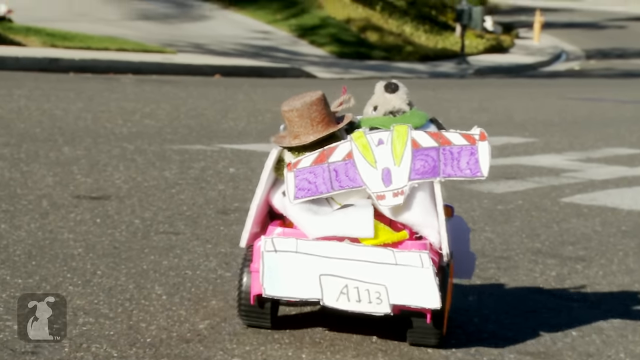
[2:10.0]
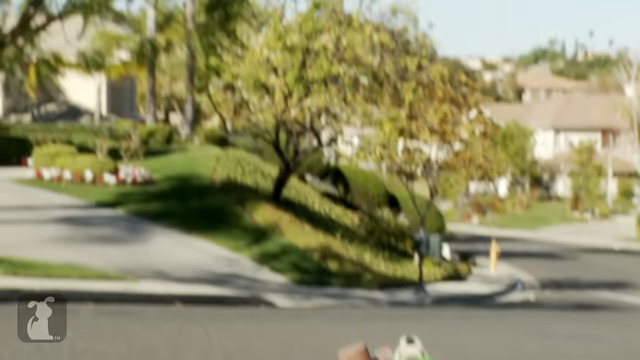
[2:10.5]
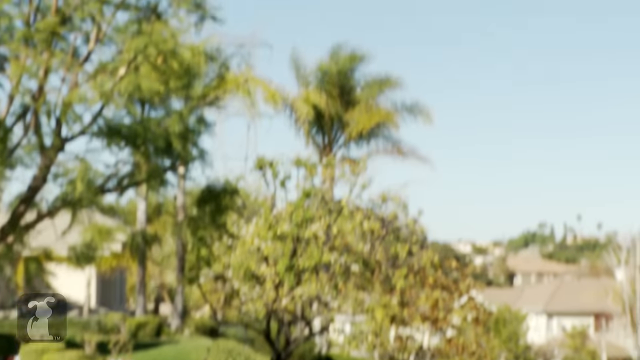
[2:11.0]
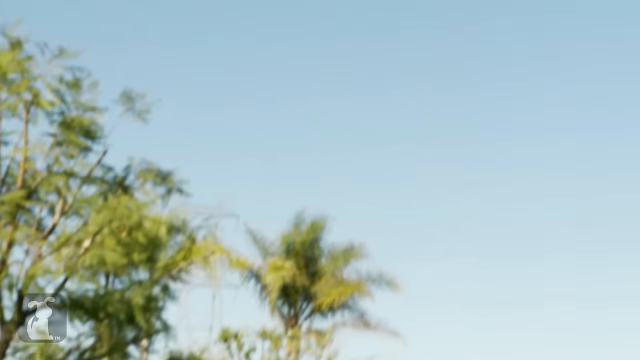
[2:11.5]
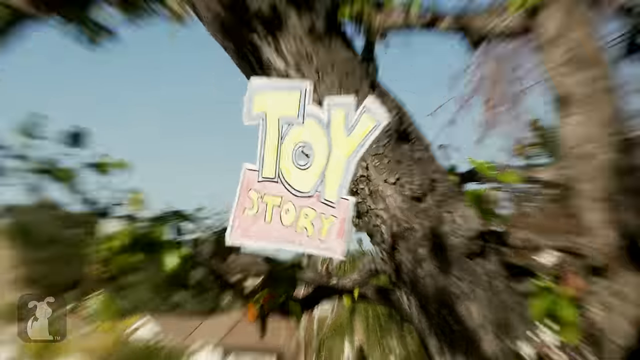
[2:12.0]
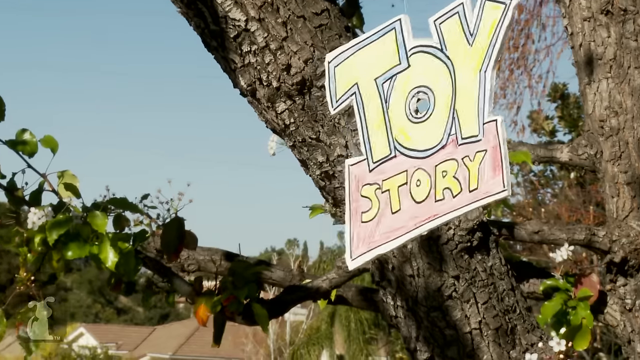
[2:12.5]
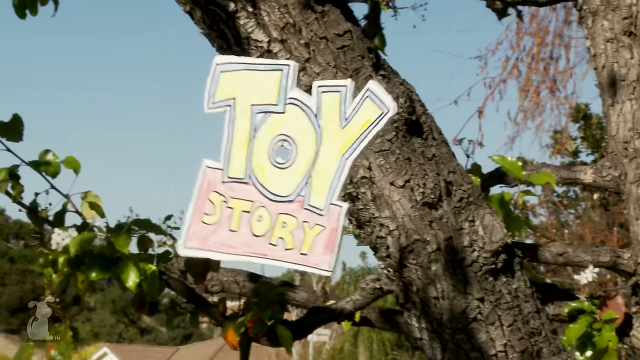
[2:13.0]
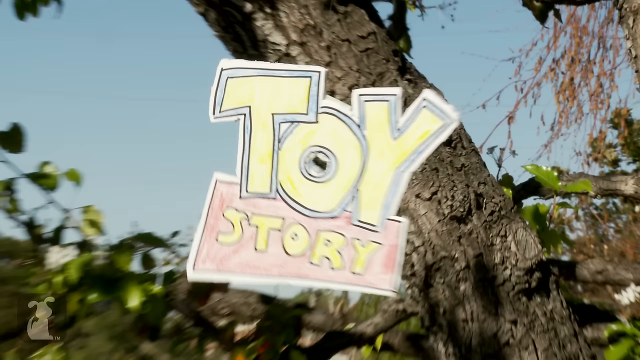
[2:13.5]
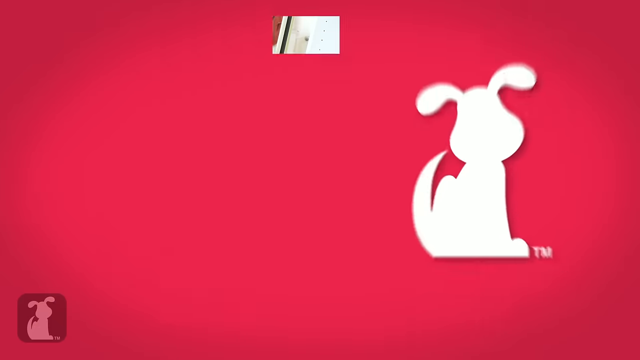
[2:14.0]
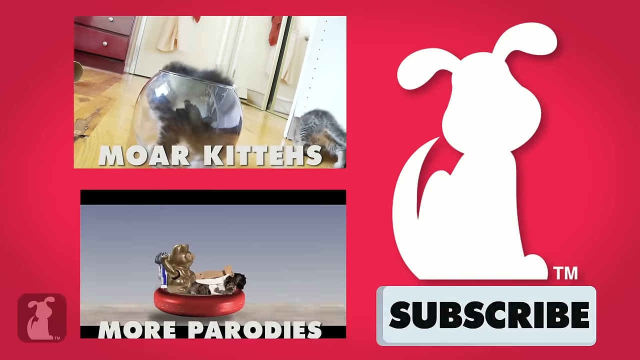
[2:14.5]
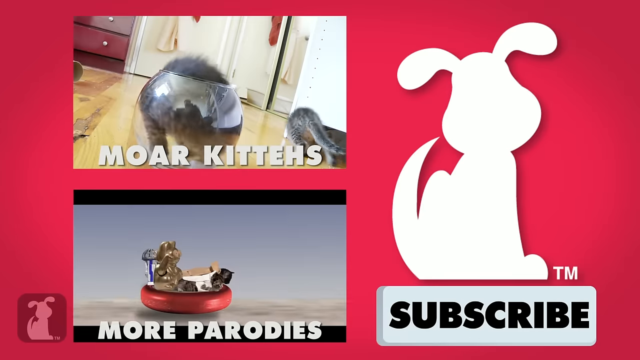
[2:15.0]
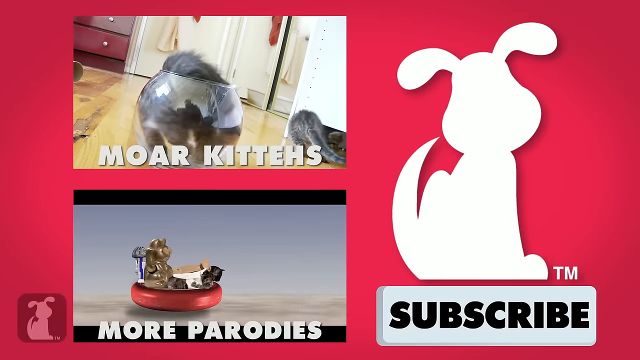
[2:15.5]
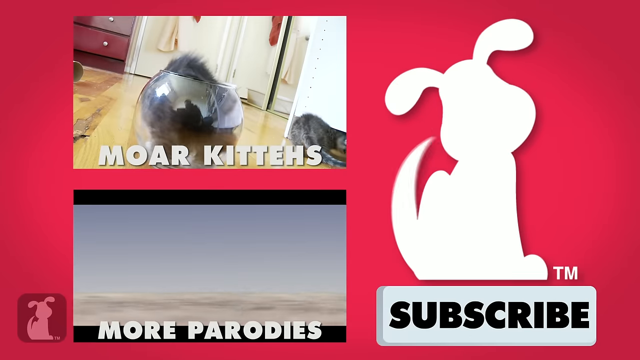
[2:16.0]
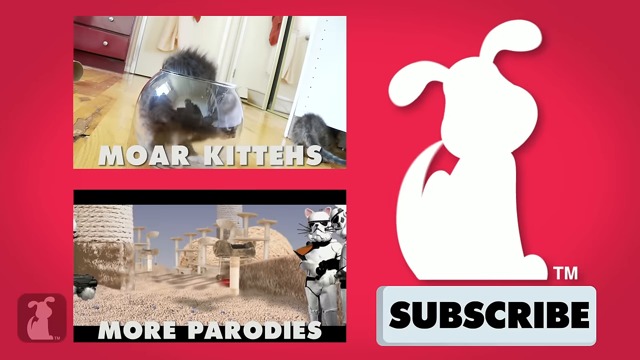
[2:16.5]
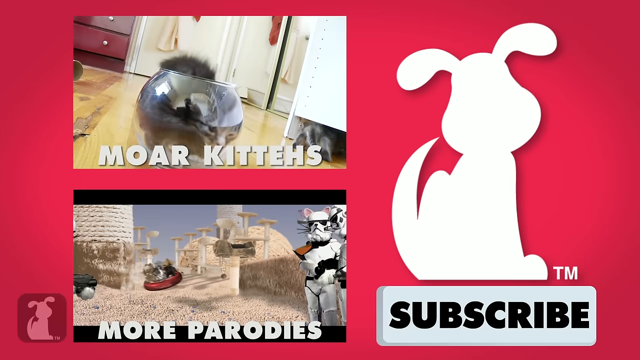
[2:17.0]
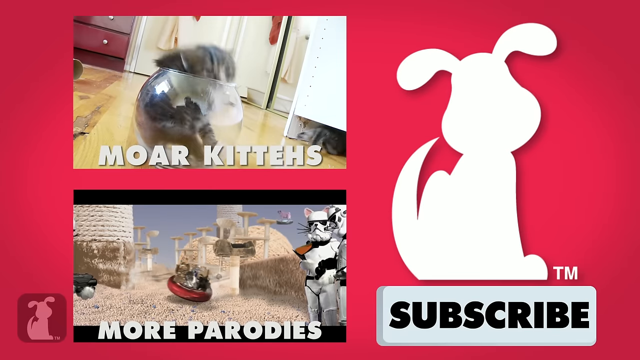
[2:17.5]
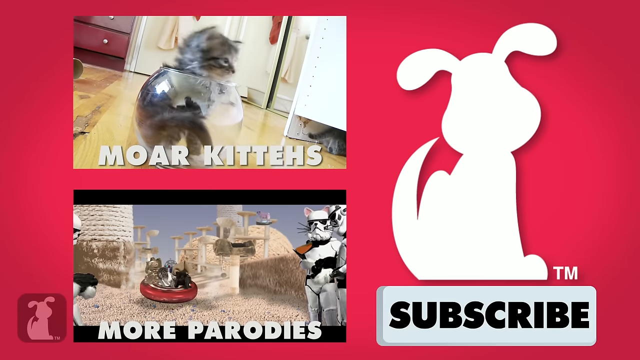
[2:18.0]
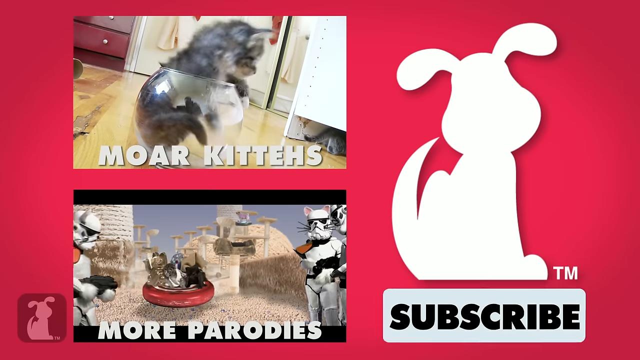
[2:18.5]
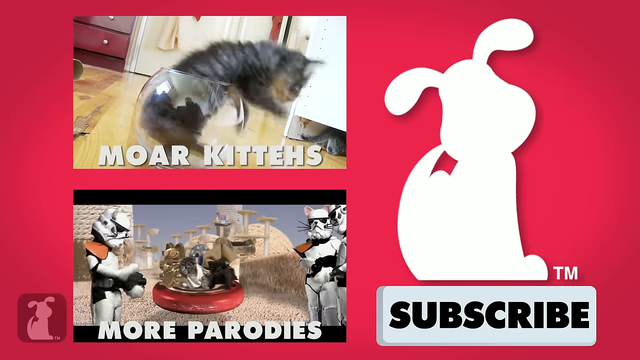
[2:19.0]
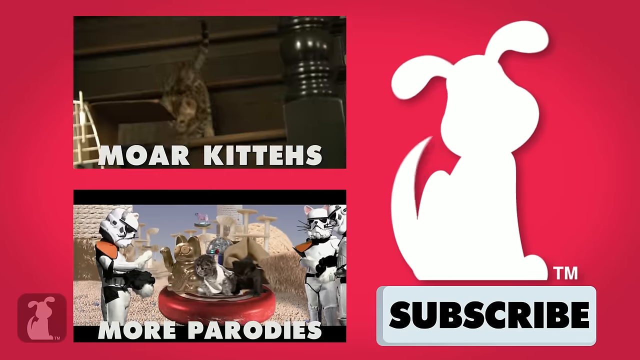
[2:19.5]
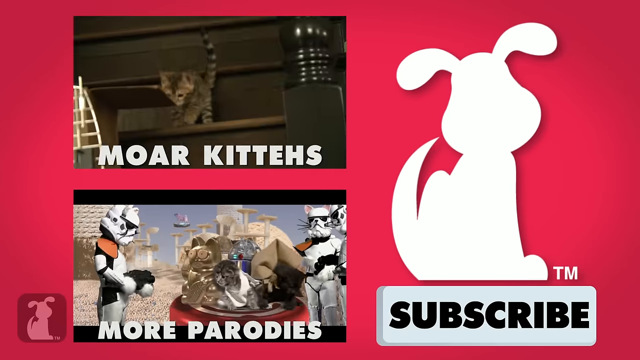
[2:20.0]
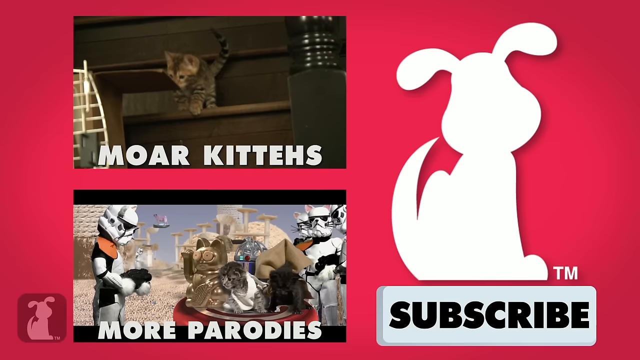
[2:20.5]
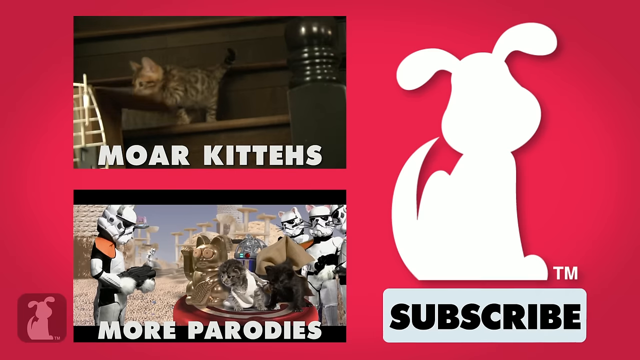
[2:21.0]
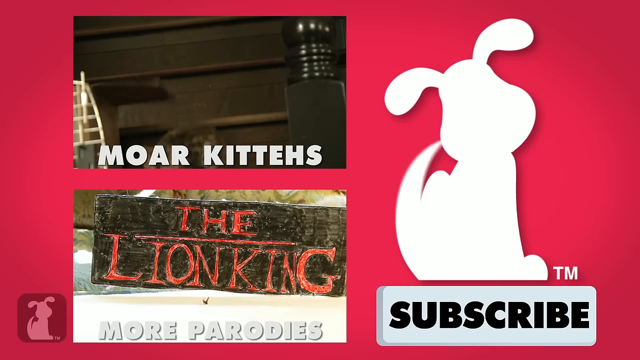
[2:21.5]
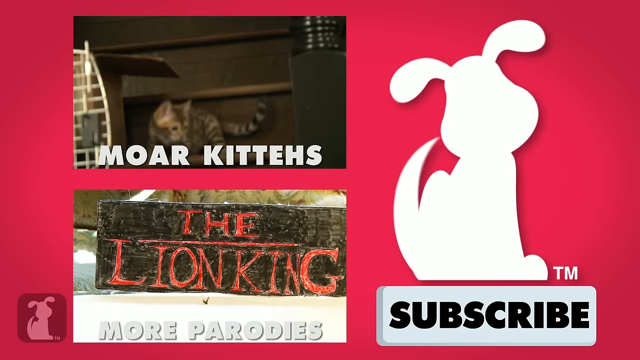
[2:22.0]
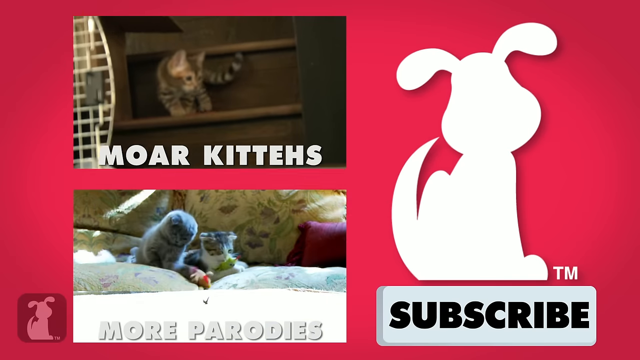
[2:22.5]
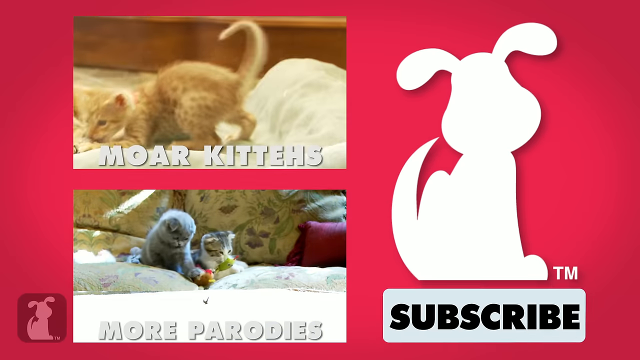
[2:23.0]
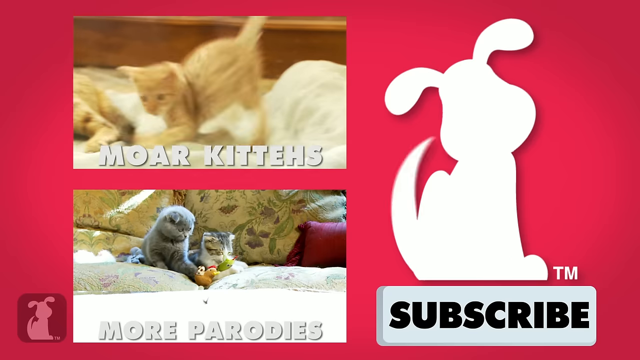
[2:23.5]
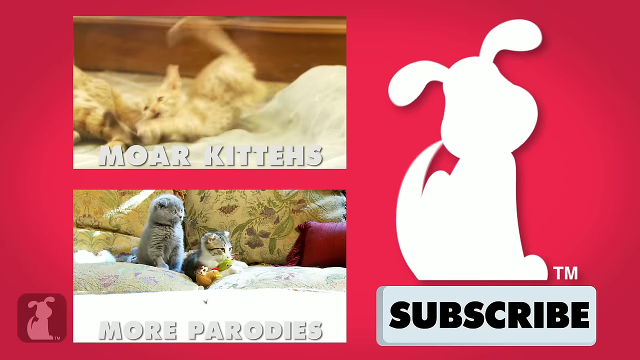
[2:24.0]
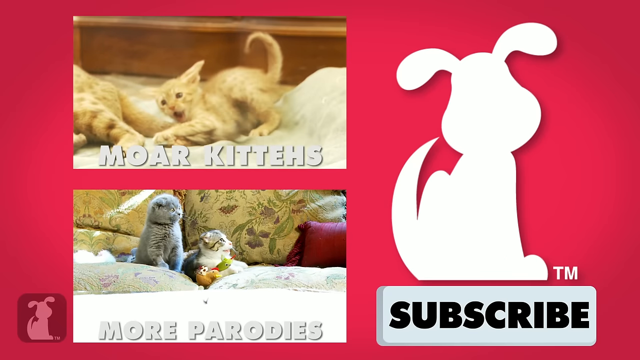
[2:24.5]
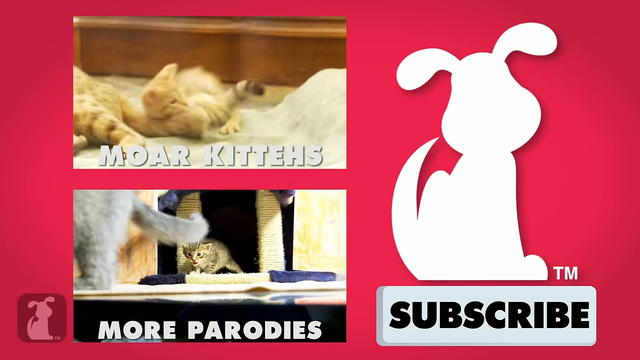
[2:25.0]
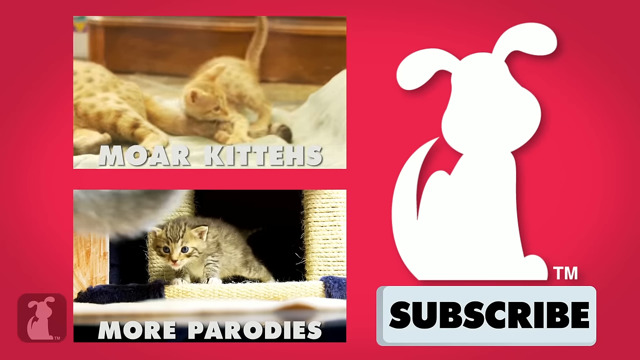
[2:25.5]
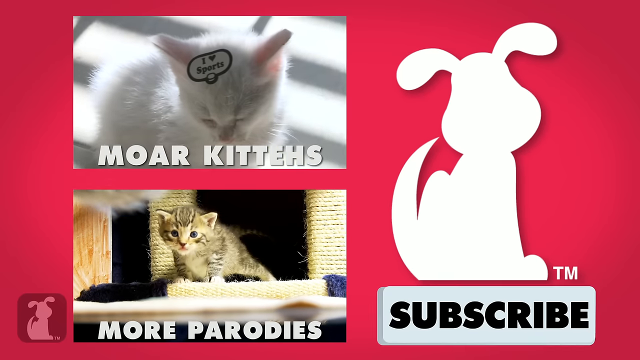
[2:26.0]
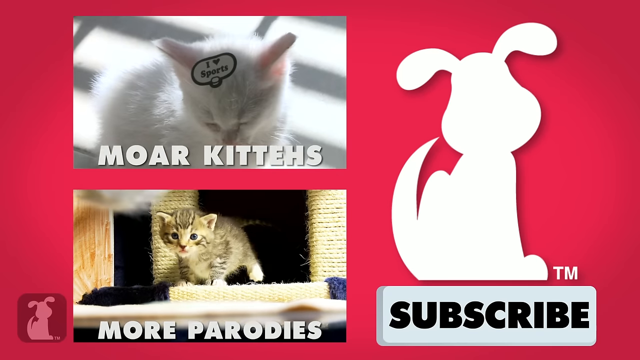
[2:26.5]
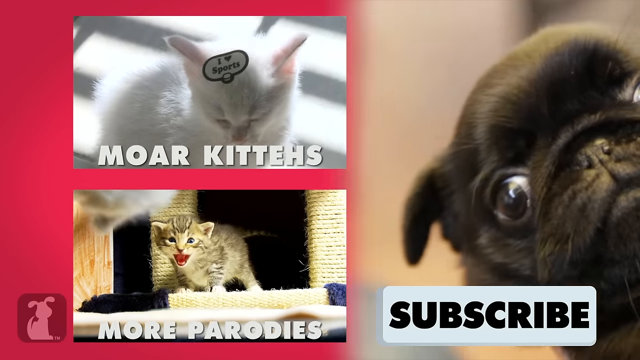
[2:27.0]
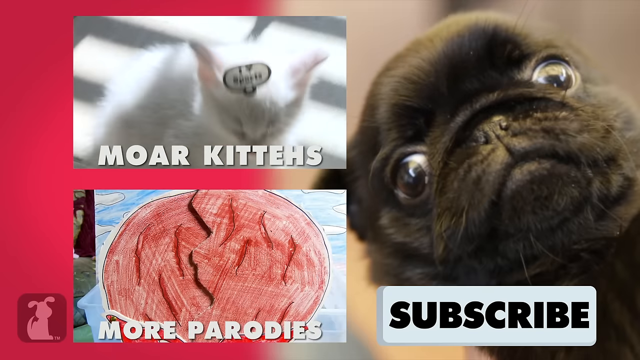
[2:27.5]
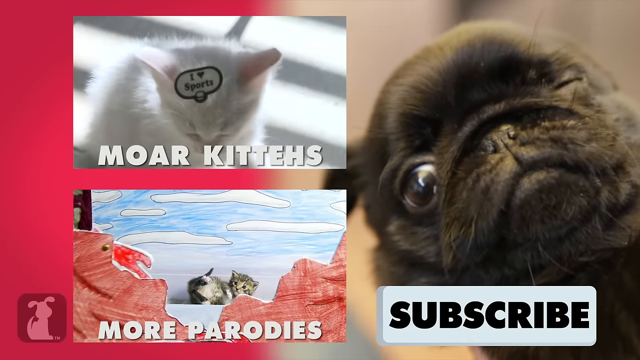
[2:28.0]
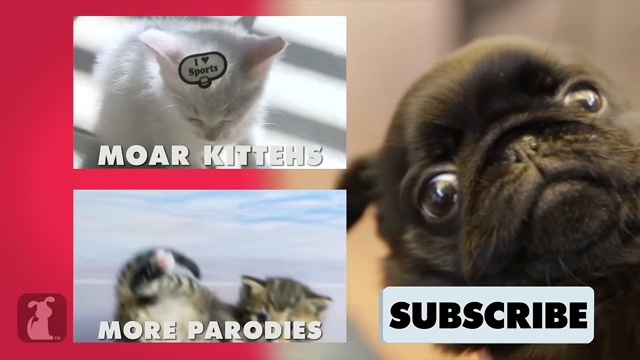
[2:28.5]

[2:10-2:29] The pink plastic car is driven off, stuffed full of cardboard boxes and presumably the two kittens. As the car takes off down the road, the camera pans up to a bright blue sky, and a cardboard-made Toy World emblem is dangling on a tree. The closing credits follow, including videos for more kittens and more parodies, and after the subscribe button a very cute dog appears in the final scene.